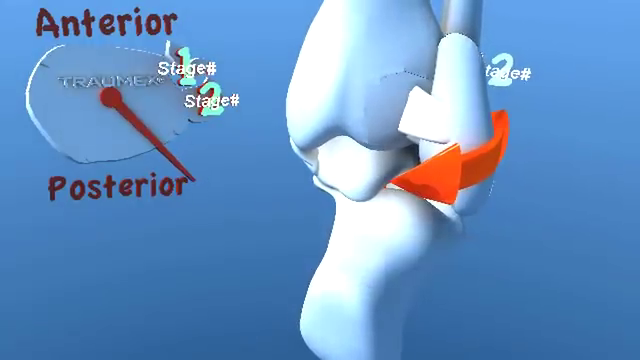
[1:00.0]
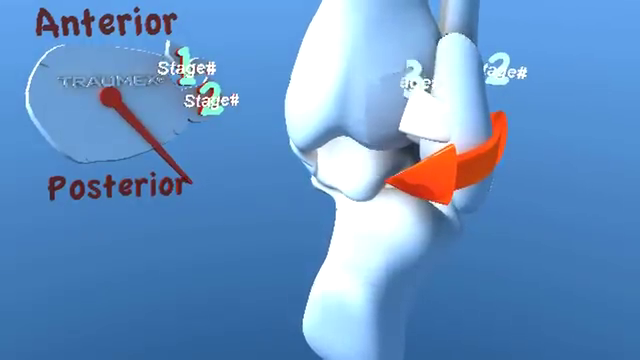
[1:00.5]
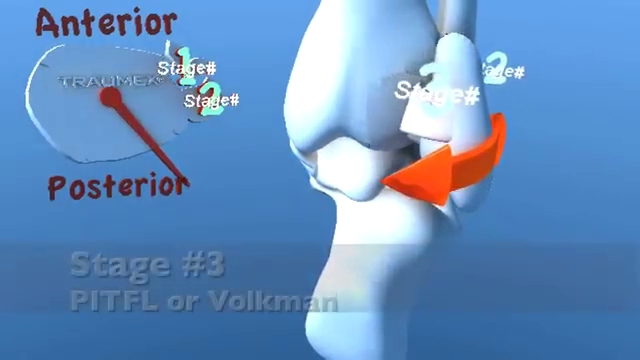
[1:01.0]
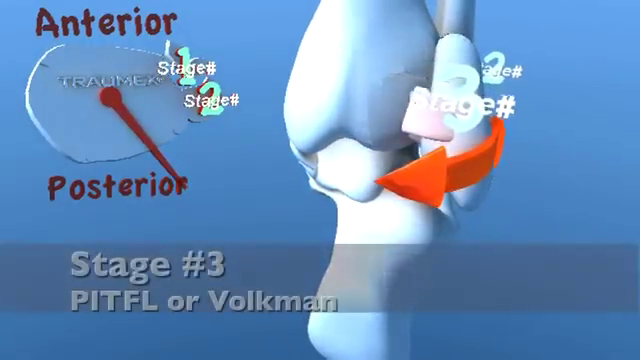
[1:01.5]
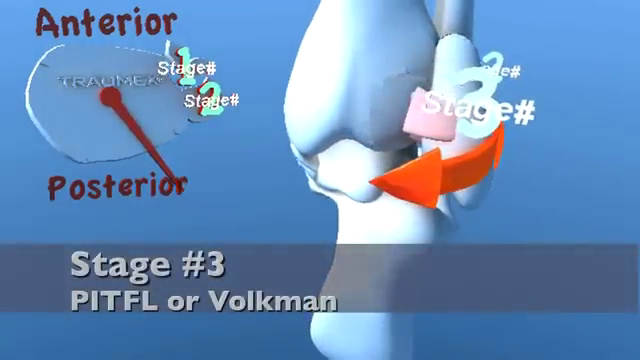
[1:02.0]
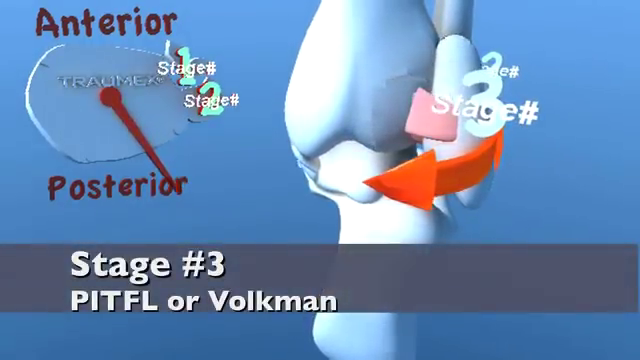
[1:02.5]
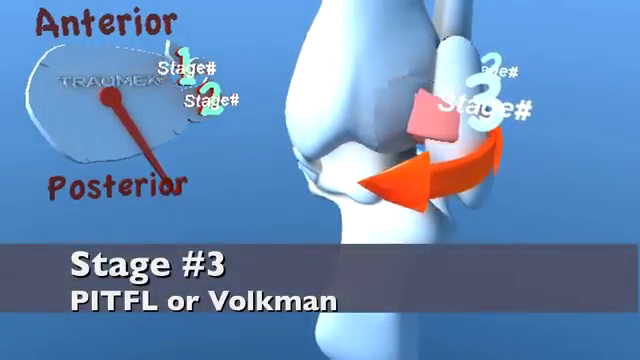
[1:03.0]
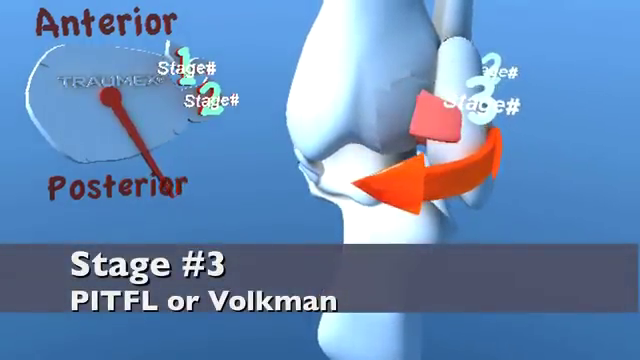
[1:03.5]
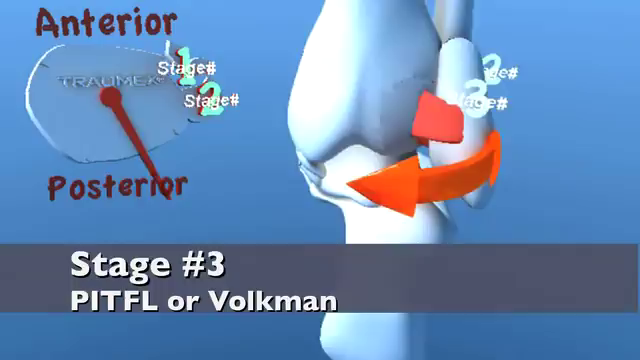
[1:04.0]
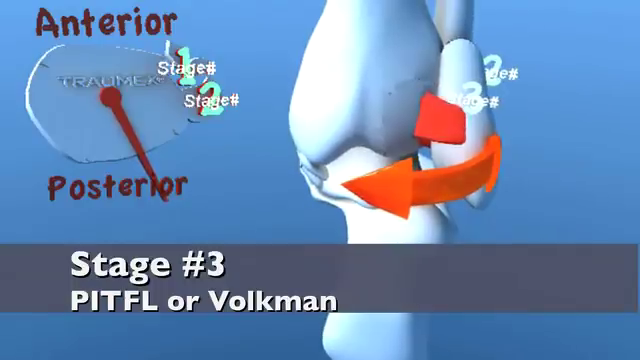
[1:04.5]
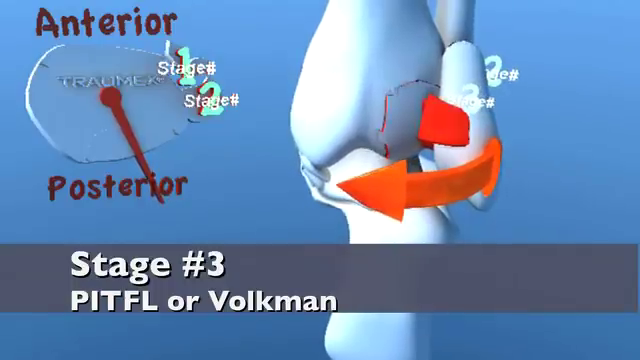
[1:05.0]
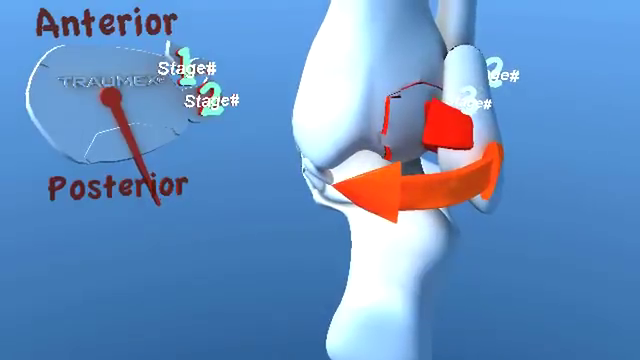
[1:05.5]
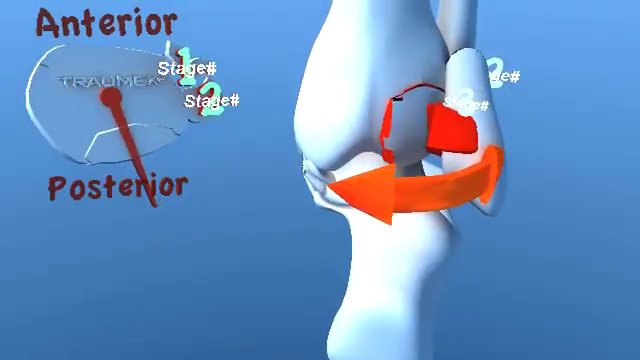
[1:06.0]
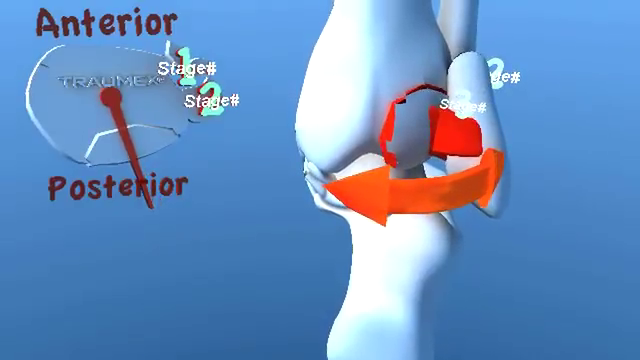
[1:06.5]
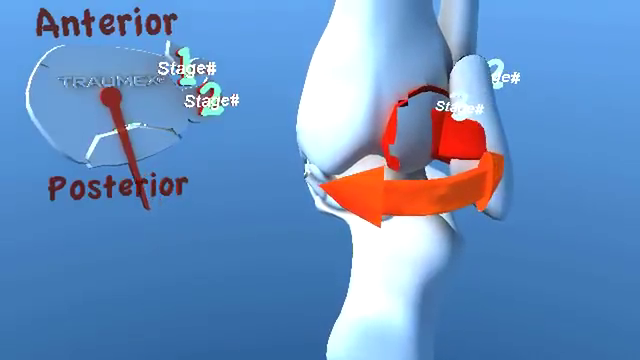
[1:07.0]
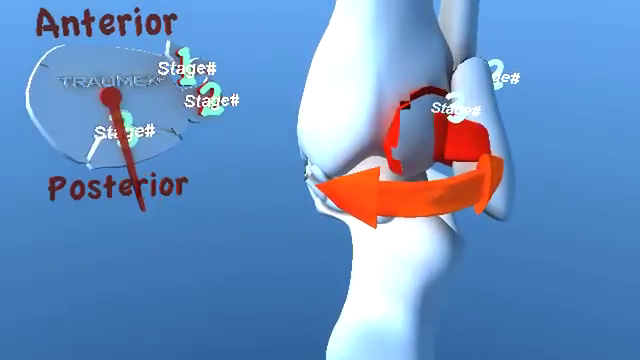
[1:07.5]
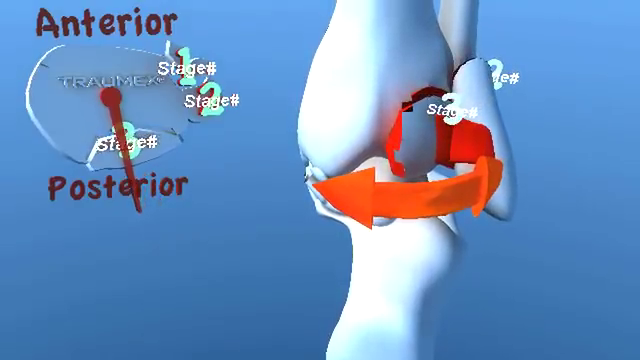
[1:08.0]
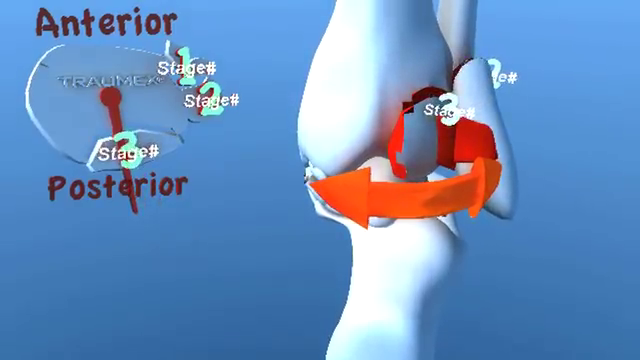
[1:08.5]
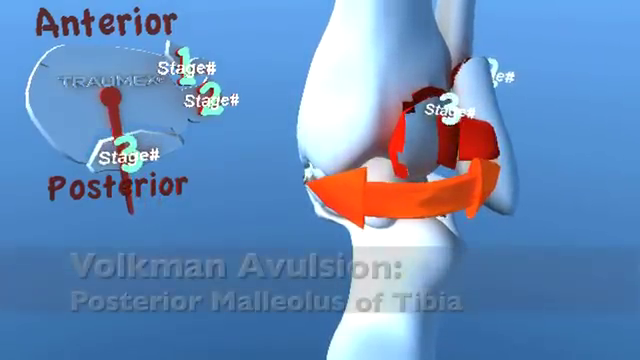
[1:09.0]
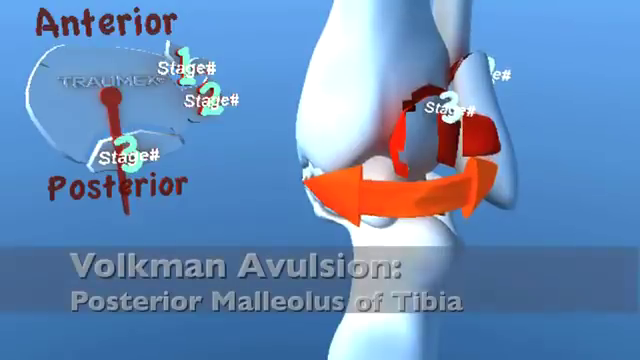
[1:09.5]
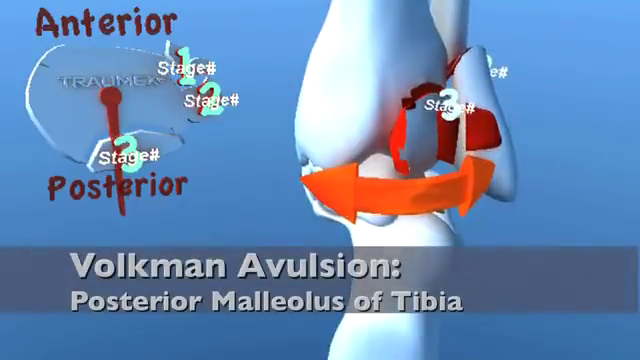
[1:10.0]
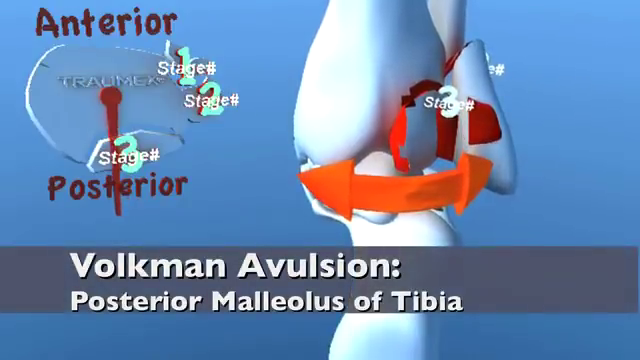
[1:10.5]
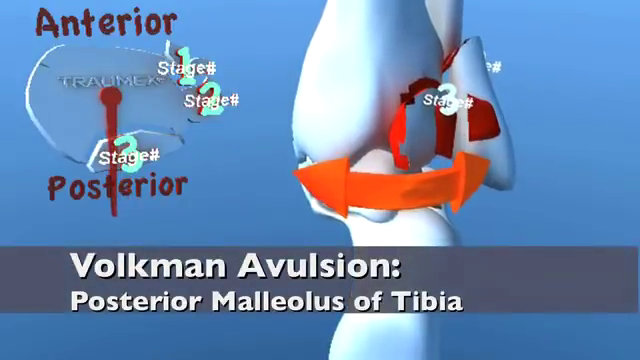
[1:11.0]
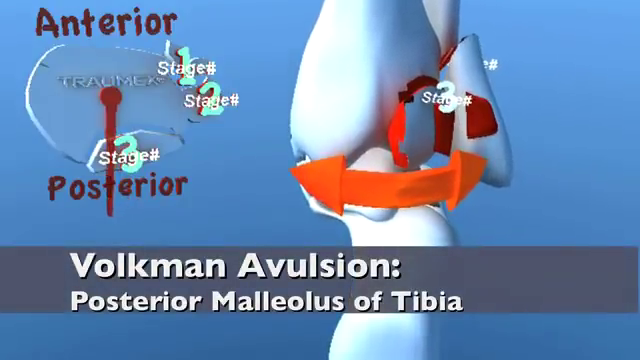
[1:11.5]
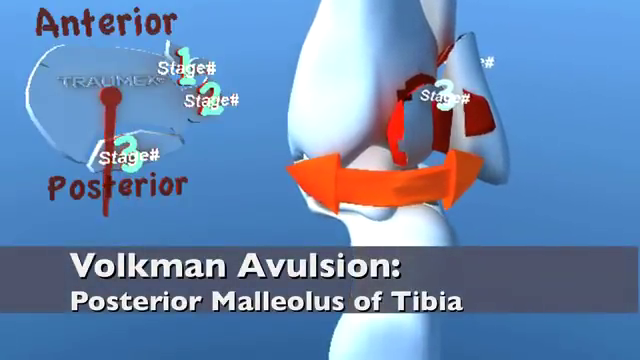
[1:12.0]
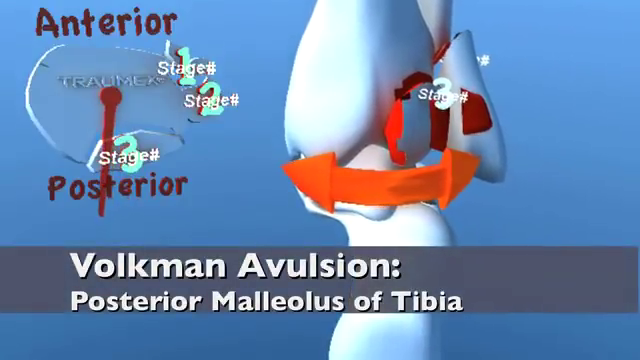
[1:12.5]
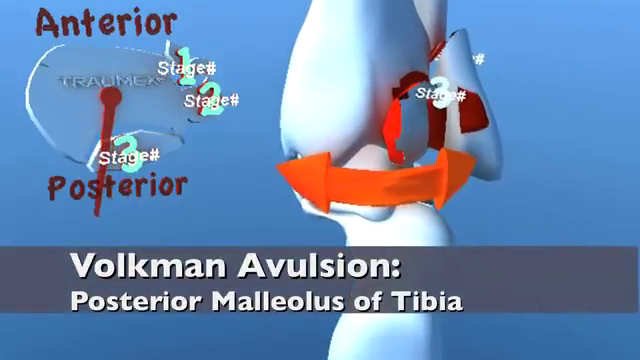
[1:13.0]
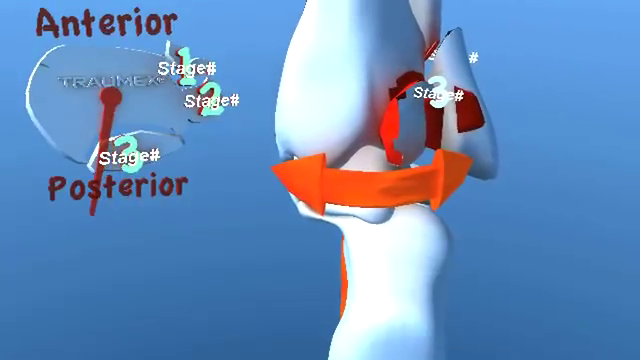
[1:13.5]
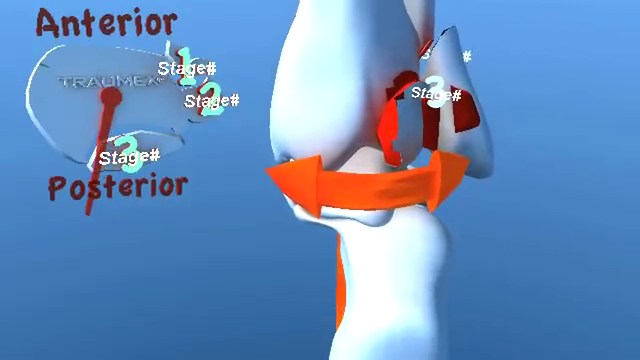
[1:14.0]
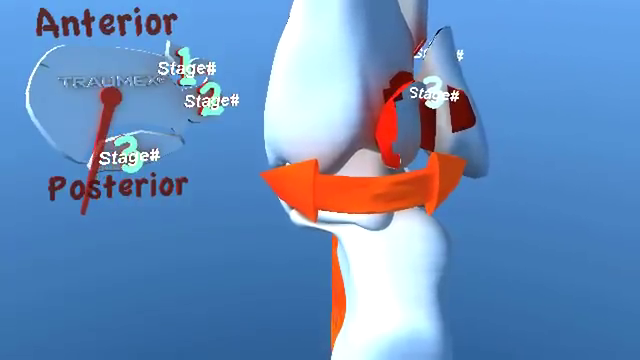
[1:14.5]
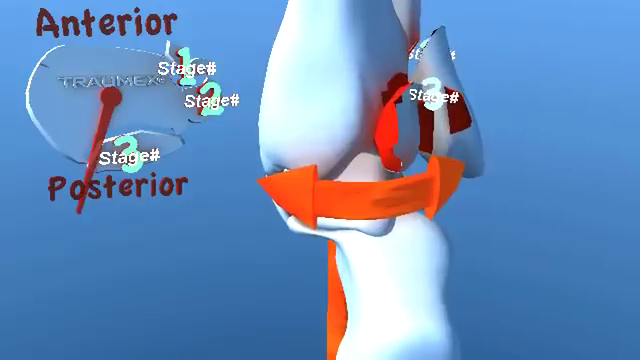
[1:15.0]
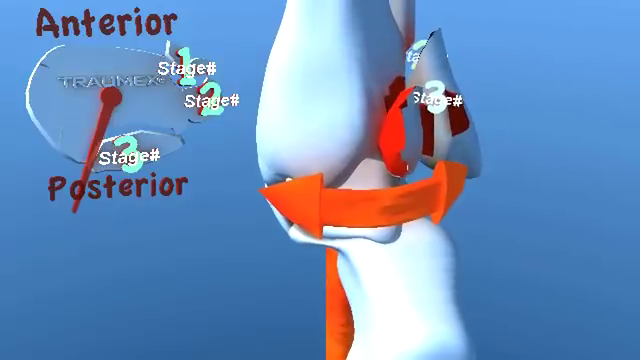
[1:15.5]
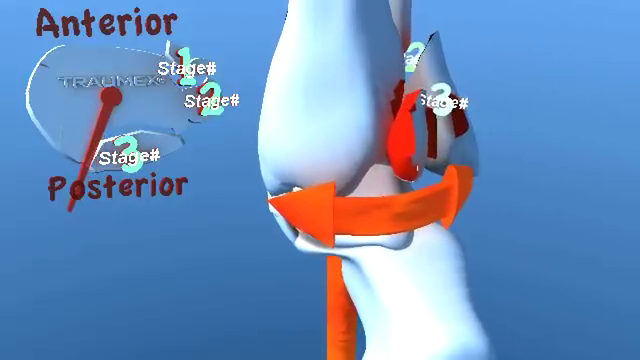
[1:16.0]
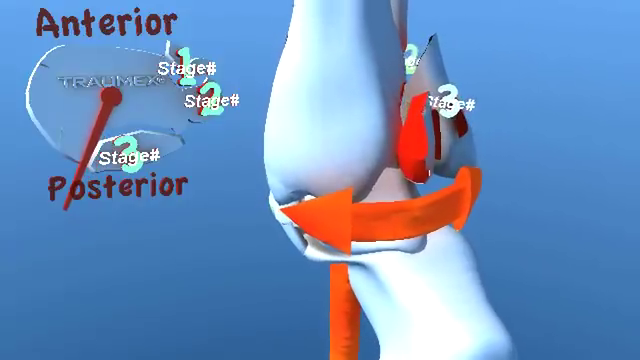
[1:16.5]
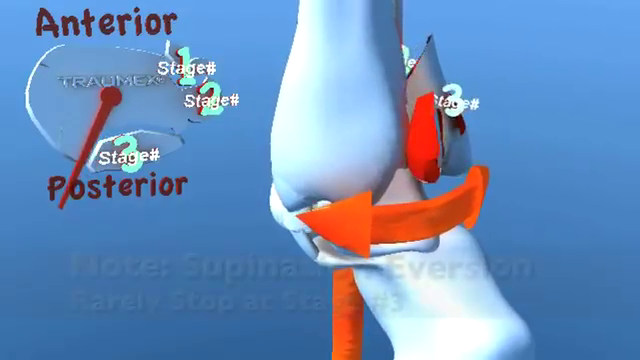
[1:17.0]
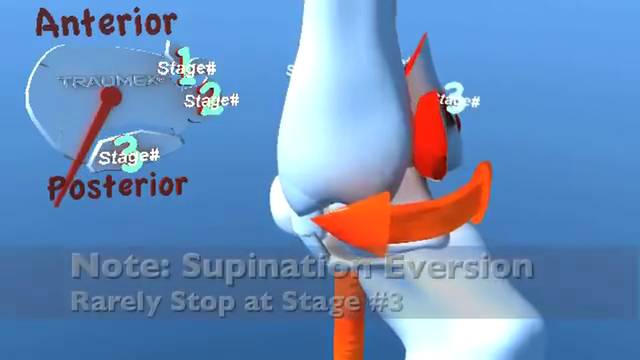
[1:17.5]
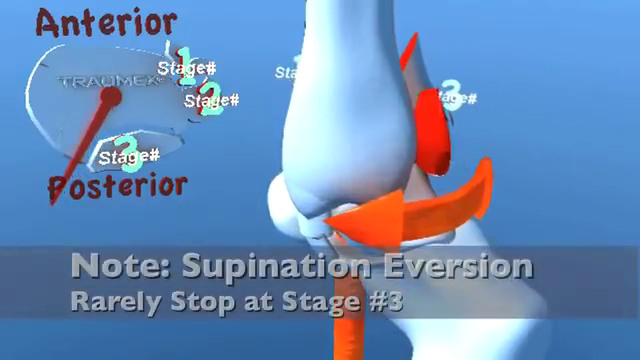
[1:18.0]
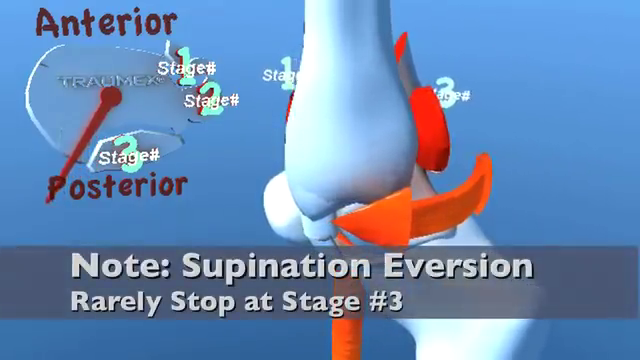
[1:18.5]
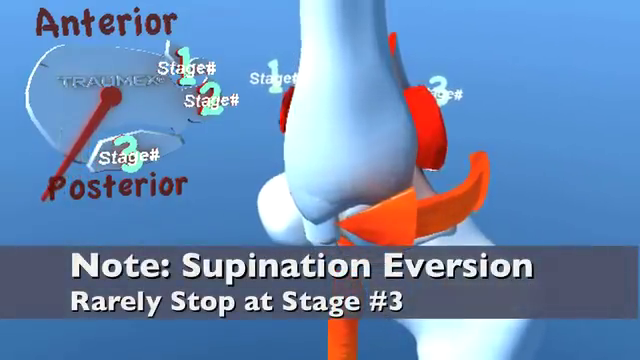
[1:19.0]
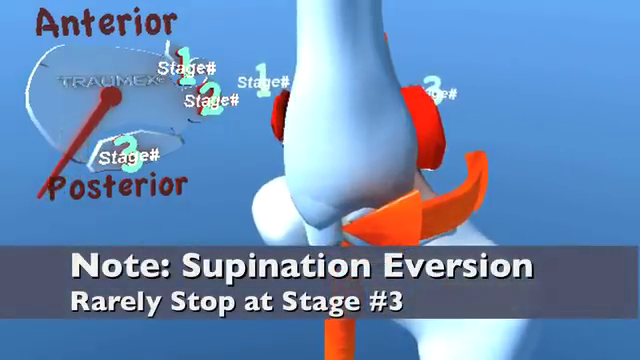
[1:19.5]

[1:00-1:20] The clock face moves around further and is now in line with the red "posterior" text at the bottom. On the ankle image the arrow continues to move around, and pink appears on one of the connective tissues. The number three with "stage" written across it appears out of the ankle. The text reappears at the bottom reading "stage number three, PITFL, or Volkman". The arrow continues to move to the left. The connective tissue becomes a deeper red, the red expands, and it fractures off from the main bone. Text beginning "Volkman, avulsion posterior" appears at the bottom of the image. At the same time, "stage three" appears at the bottom of the clock, around the six o'clock position. The hand keeps moving, and the camera moves up to show a higher view of the ankle bone, which rotates anti-clockwise. The text at the bottom changes to "supination eversion, rarely stop at stage number three". The ankle continues to rotate.